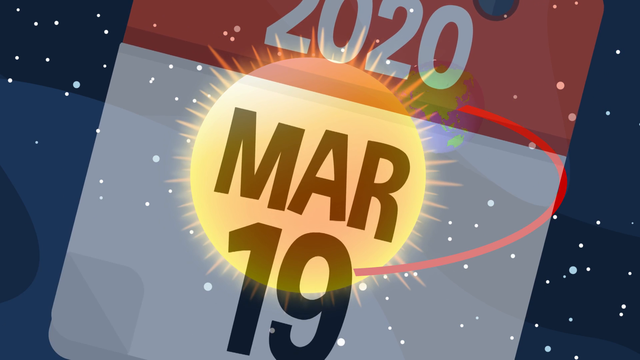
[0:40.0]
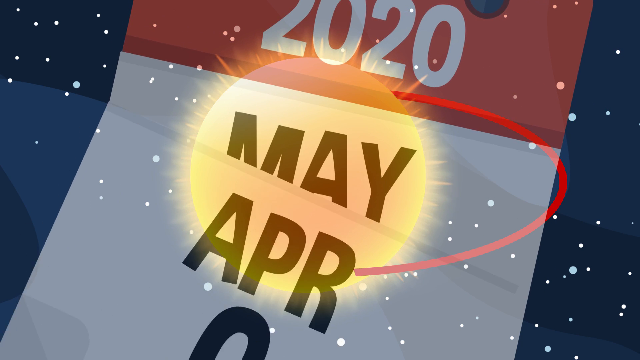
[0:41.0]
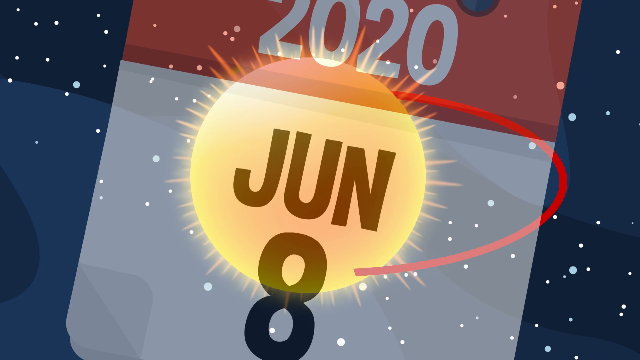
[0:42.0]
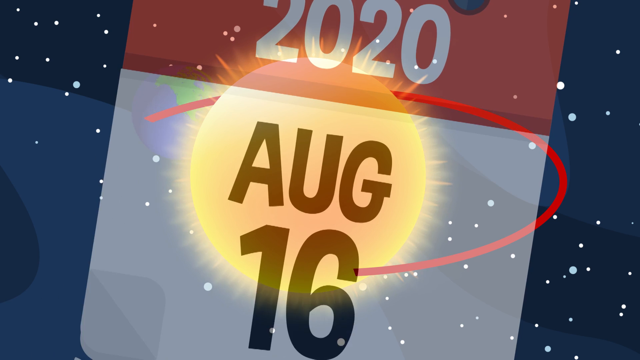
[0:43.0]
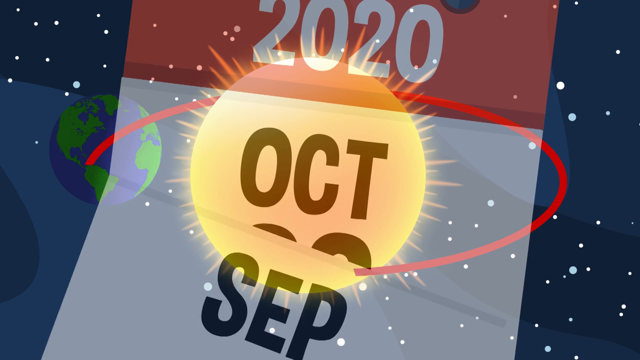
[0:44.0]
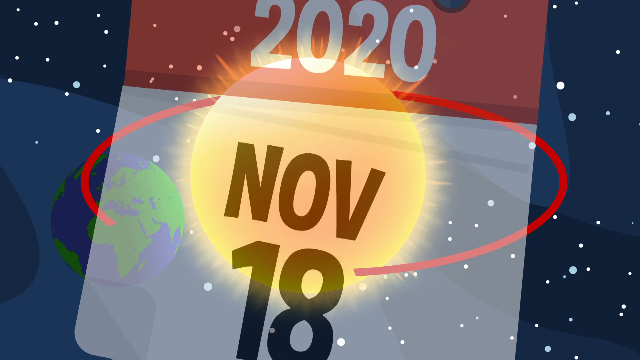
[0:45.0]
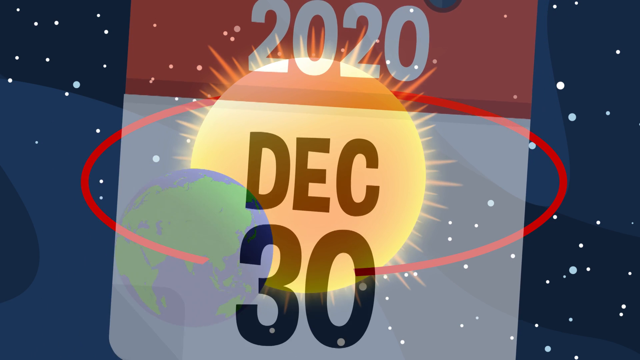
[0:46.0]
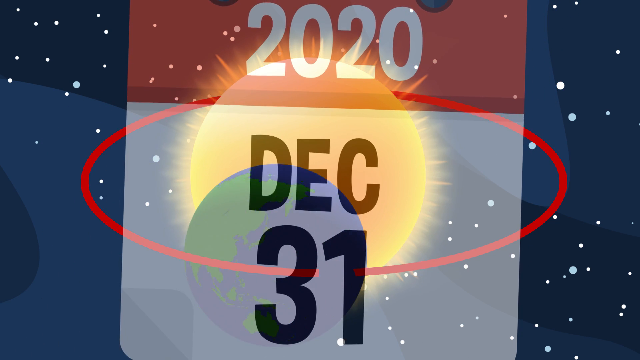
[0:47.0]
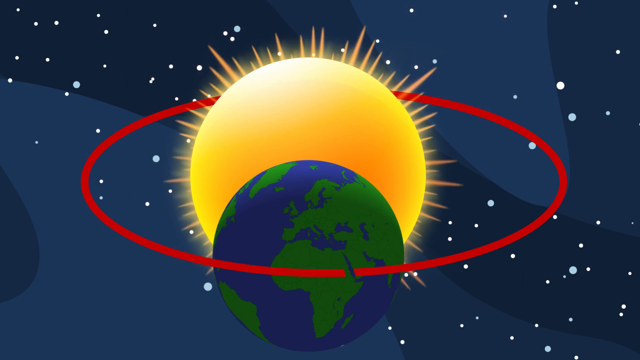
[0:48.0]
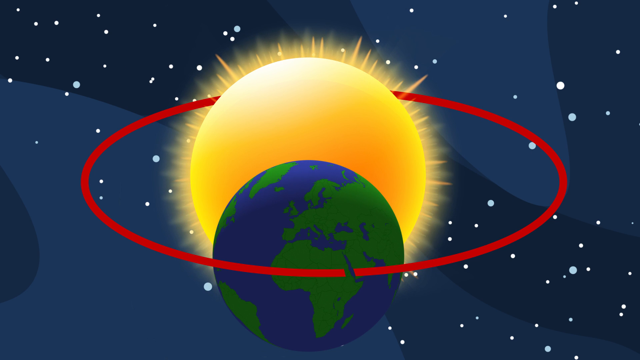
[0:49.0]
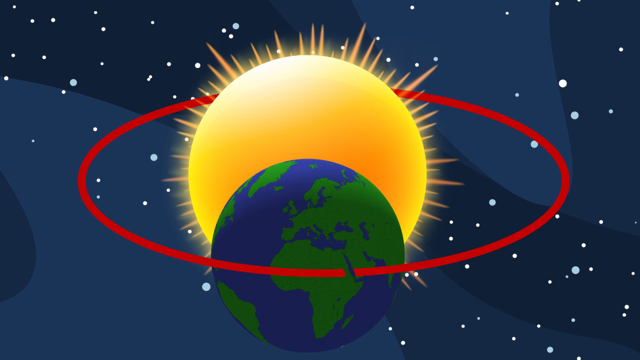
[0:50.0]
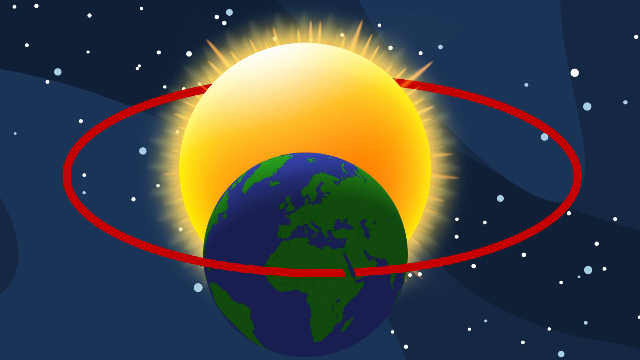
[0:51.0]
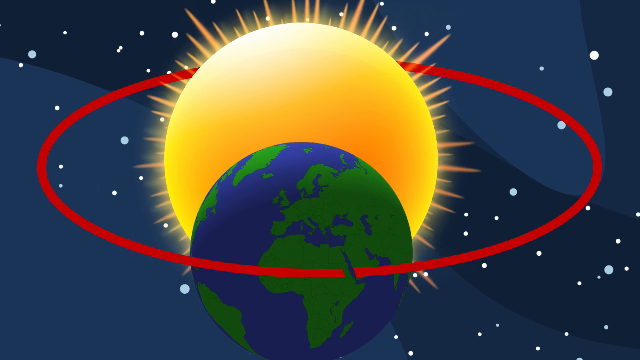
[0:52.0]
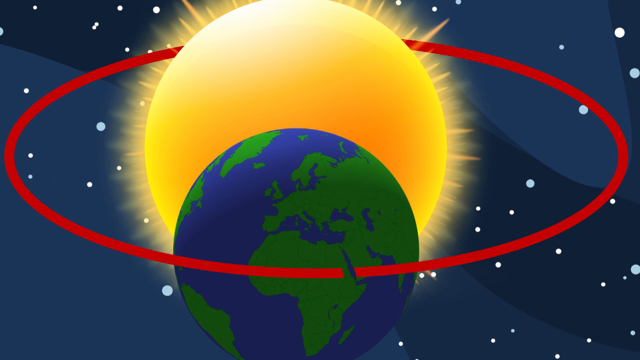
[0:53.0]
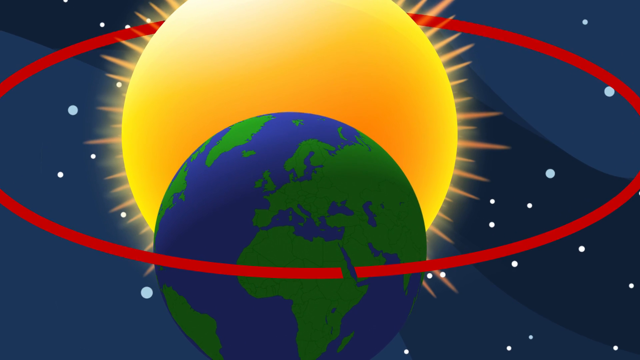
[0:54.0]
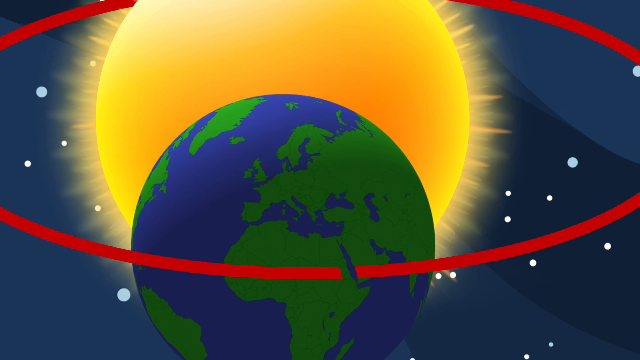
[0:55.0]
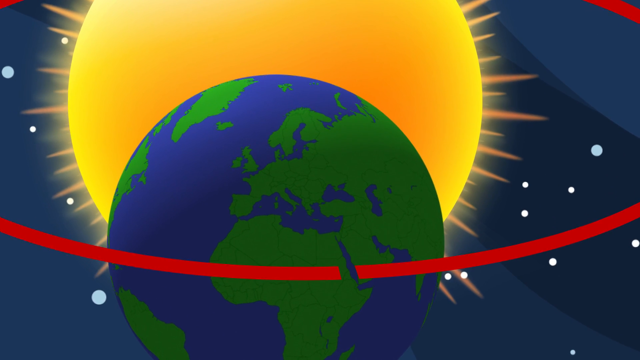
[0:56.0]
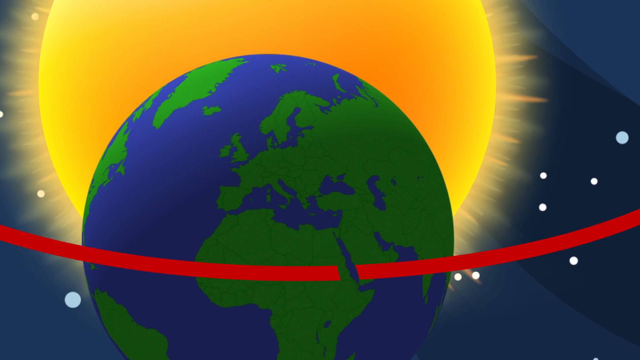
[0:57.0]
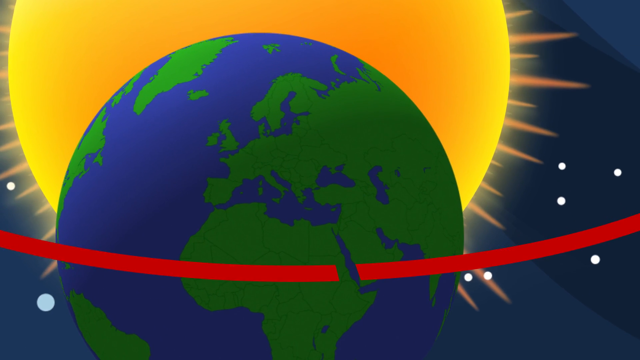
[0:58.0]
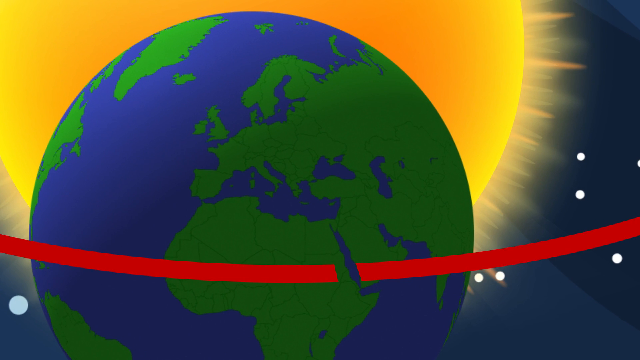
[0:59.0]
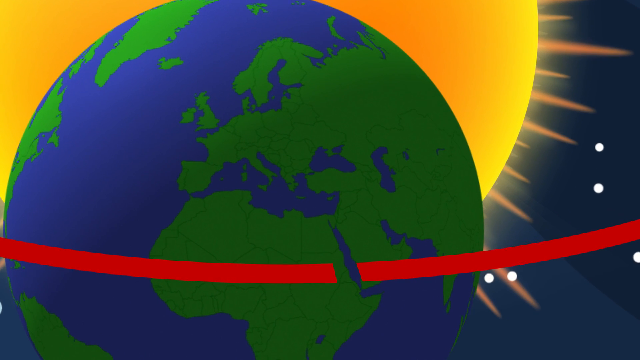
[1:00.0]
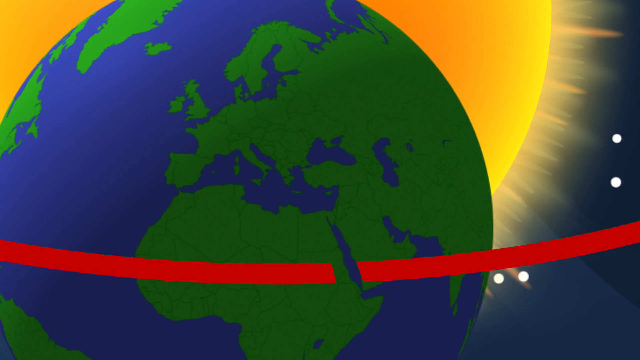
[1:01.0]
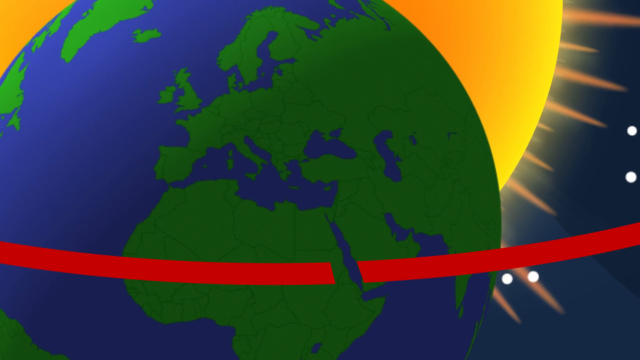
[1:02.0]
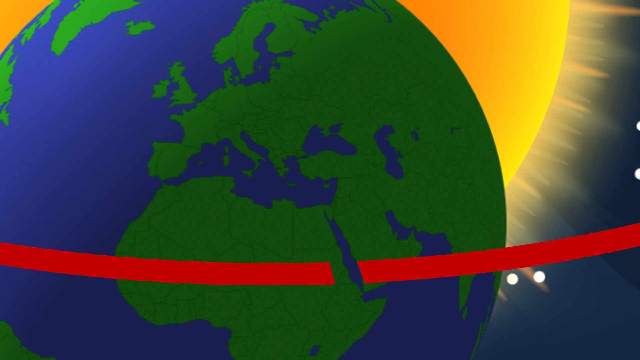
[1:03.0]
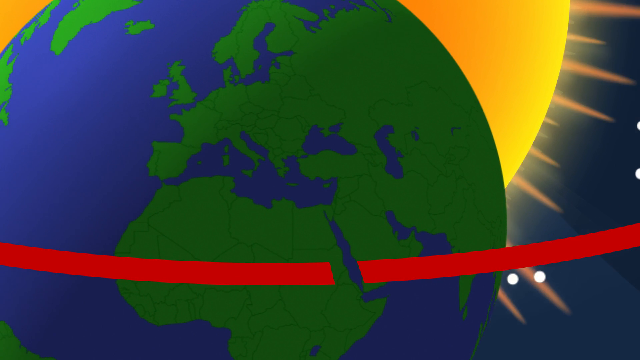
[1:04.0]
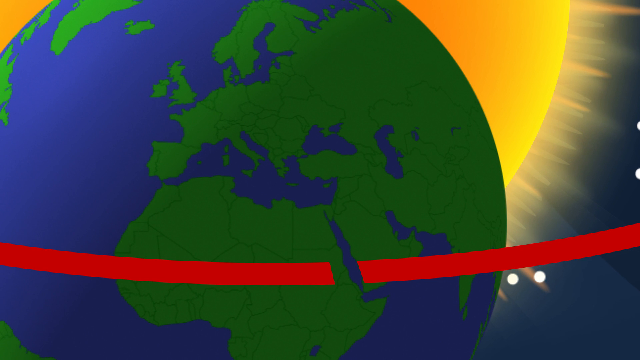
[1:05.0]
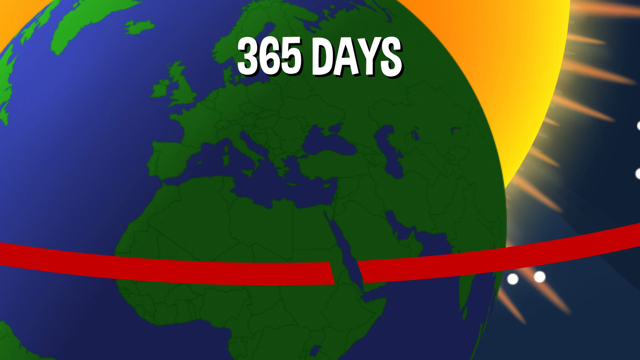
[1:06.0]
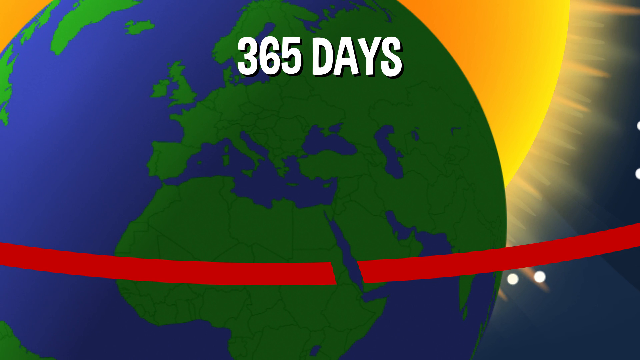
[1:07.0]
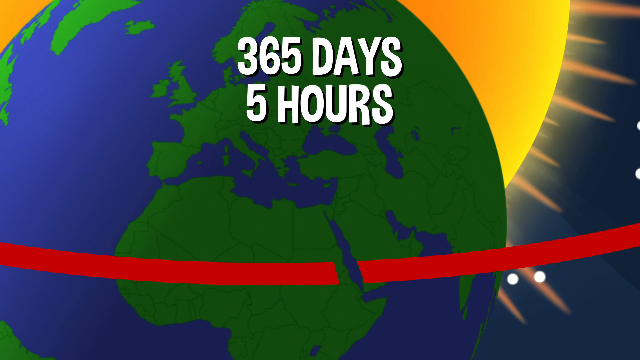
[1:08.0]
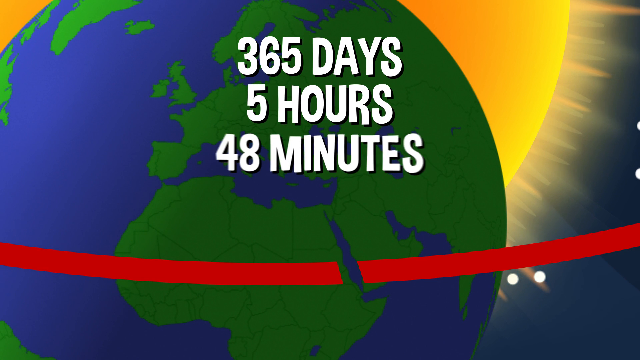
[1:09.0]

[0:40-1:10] Earth continues moving around the sun while a transparent calendar passes through the days of 2020, from January to December 31. At that point Earth stops spinning around the sun and on its own axis. The camera approaches Earth, and text appears above reading "365 days, 5 hours, 48 minutes and 46 seconds".